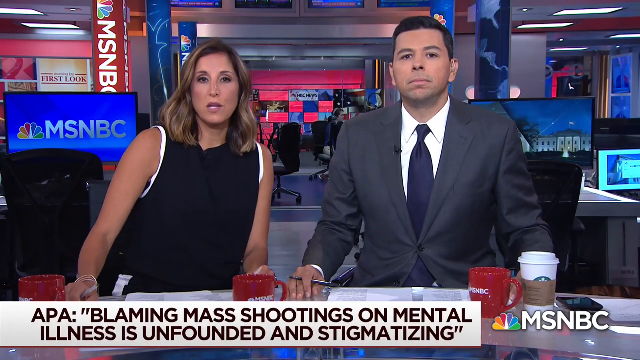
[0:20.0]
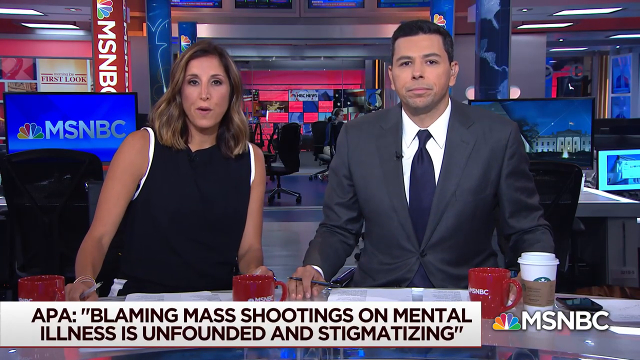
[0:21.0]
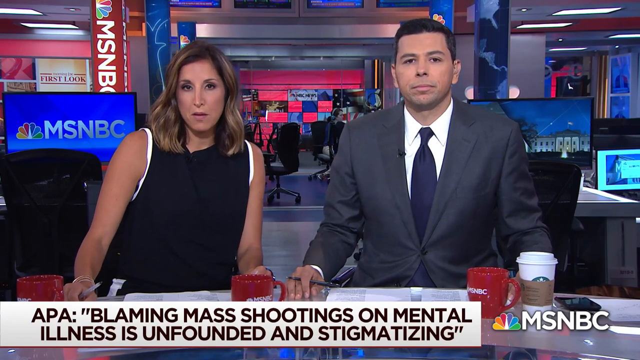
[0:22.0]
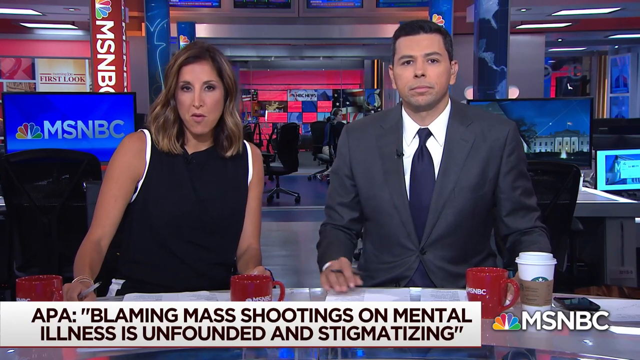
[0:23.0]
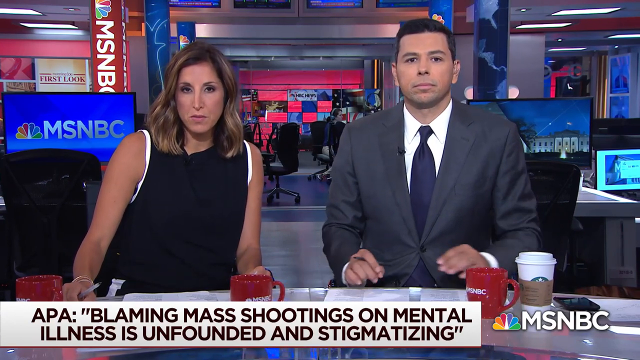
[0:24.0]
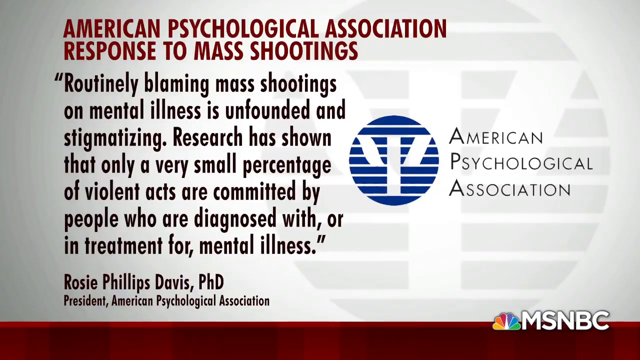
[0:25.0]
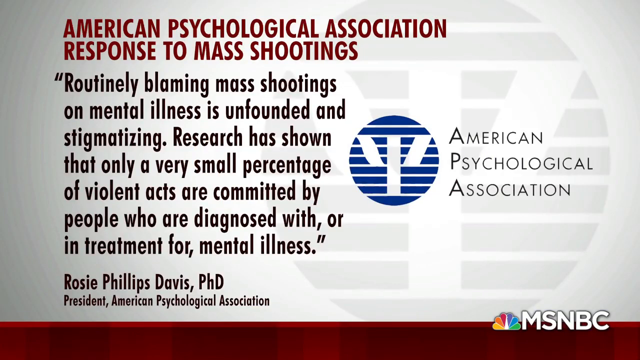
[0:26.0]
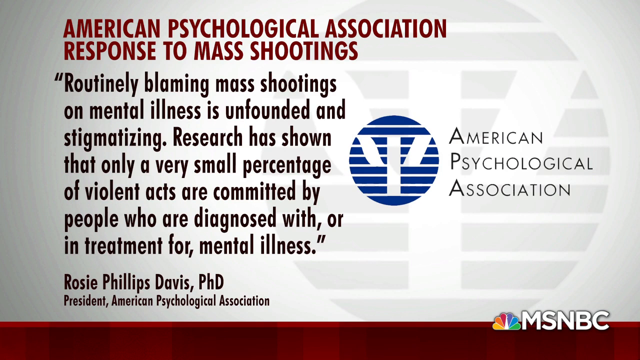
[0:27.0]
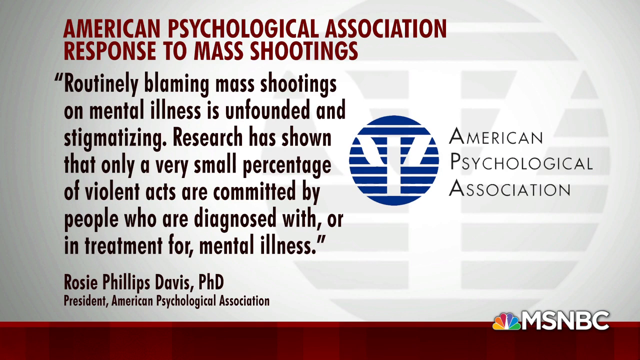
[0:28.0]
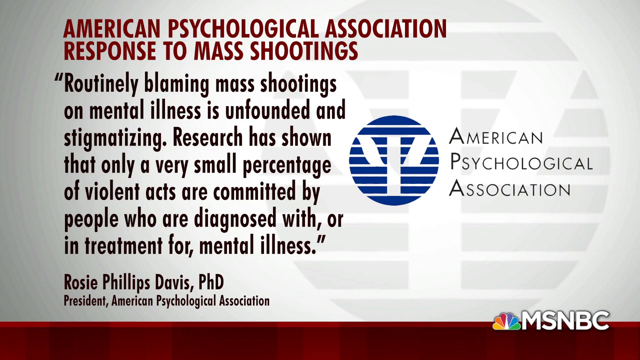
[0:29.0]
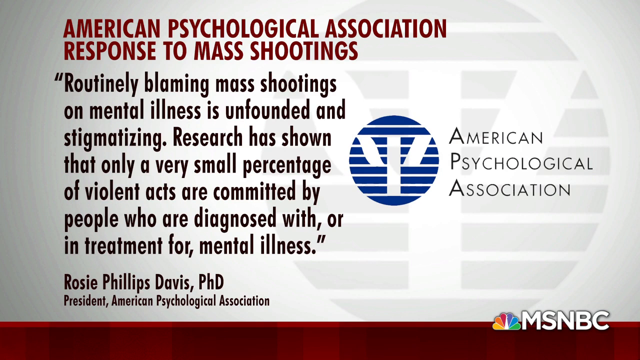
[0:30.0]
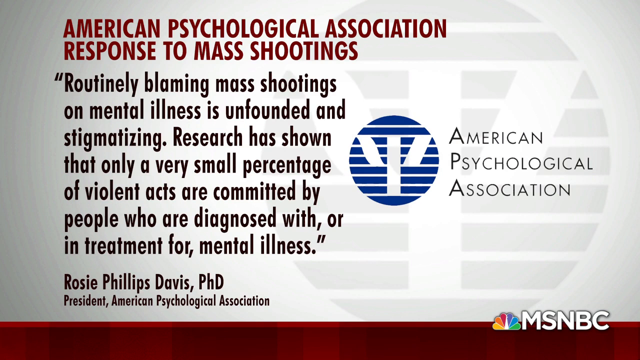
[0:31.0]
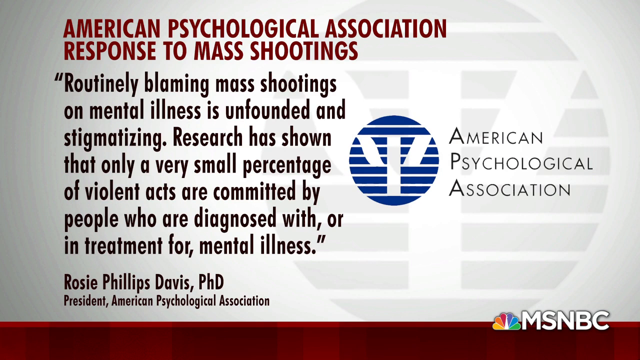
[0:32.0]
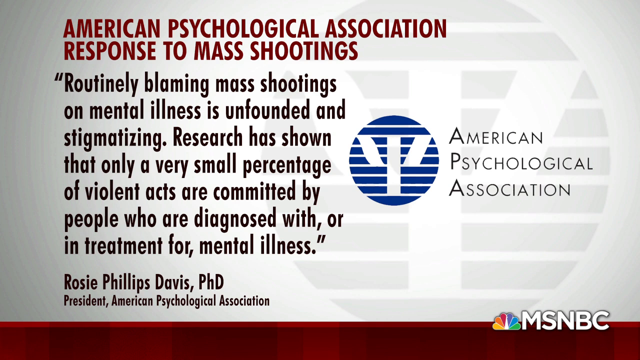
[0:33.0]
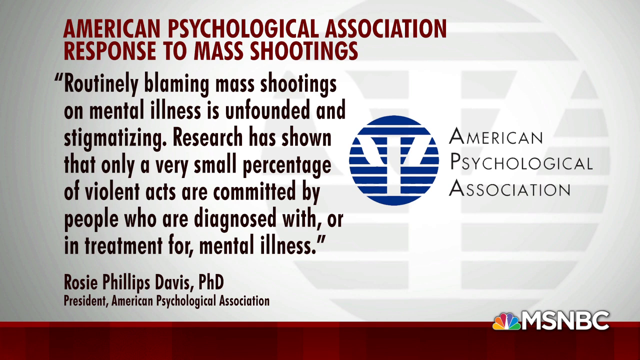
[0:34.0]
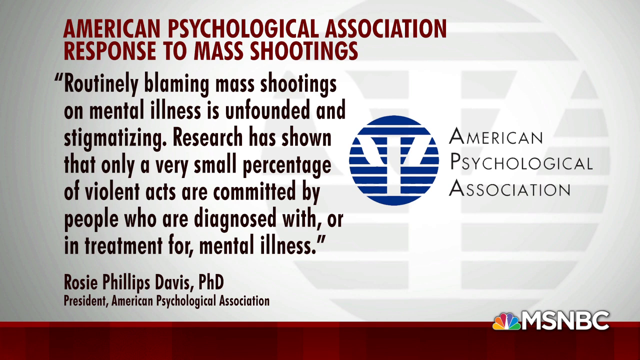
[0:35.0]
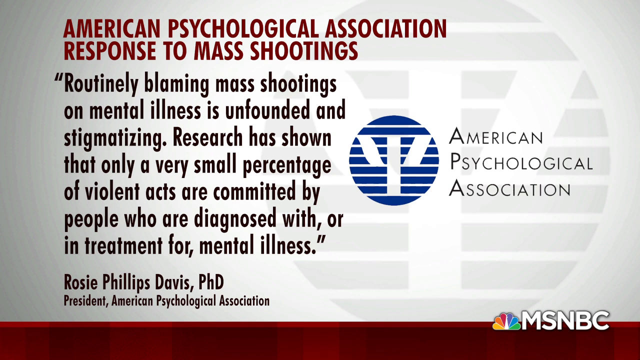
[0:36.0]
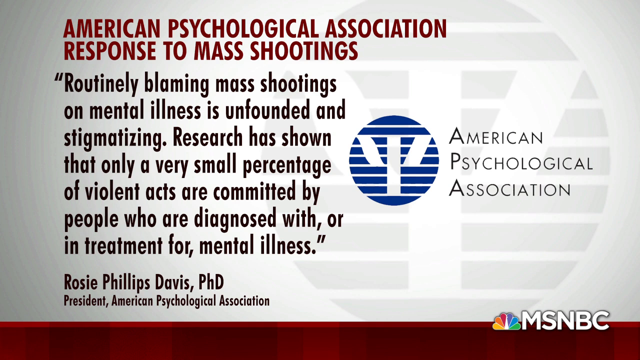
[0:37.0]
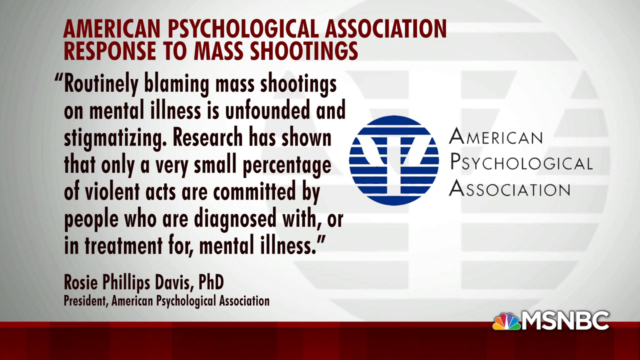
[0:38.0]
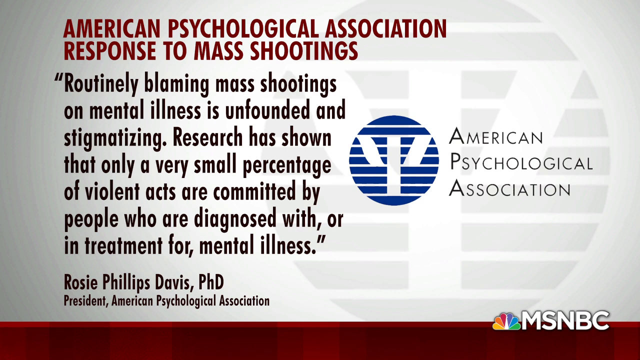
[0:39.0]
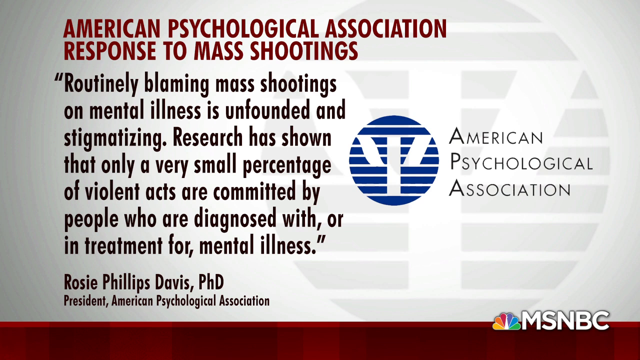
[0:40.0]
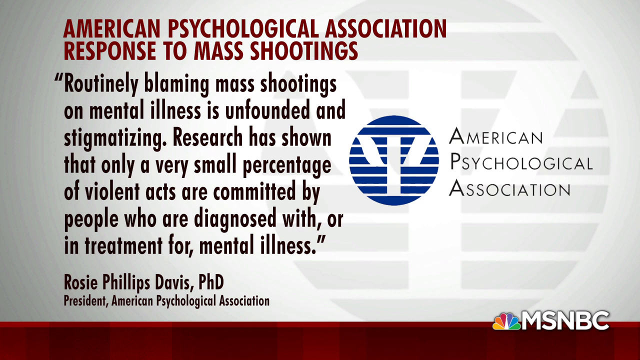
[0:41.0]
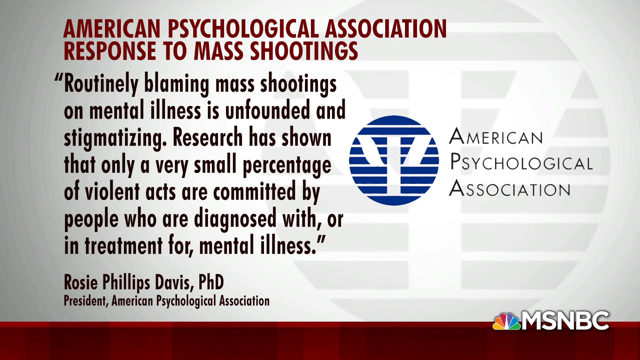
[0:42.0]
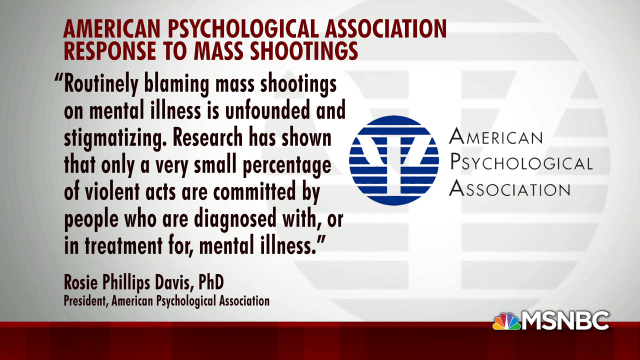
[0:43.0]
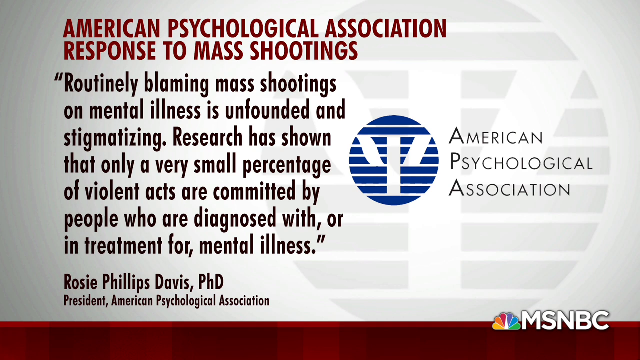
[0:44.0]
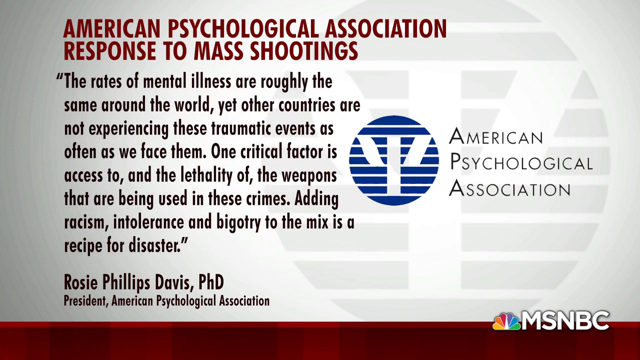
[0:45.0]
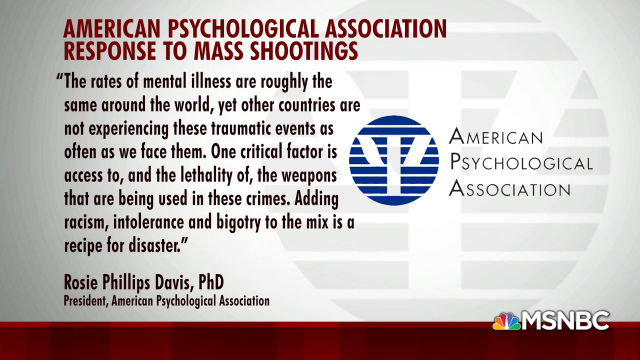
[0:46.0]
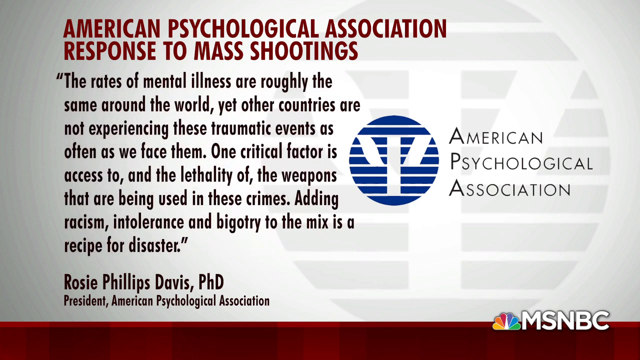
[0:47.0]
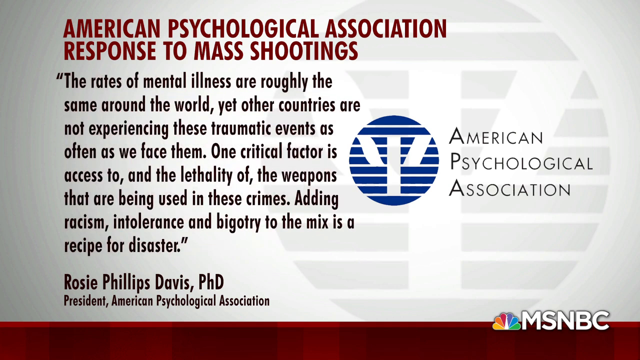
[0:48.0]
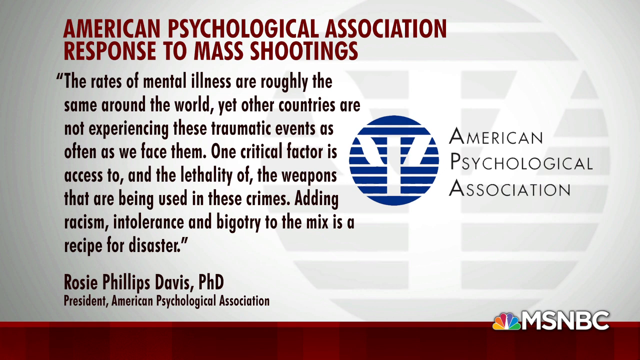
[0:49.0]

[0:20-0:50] A screen headed "American Psychological Association response to mass shootings" reads "routinely blaming mass shootings on mental illness is unfounded and stigmatizing. Research has shown that only a very small percentage of violent acts are committed by people who are diagnosed with or in treatment for mental illness," attributed to Royce Phillips, PhD, President, American Psychological Association. Two MSNBC news anchors appear; one is dressed in a suit and the other in a gown.